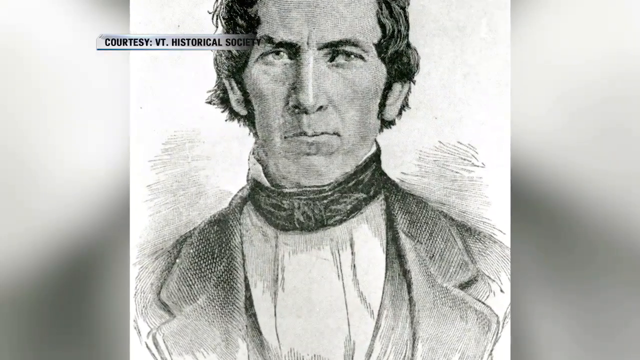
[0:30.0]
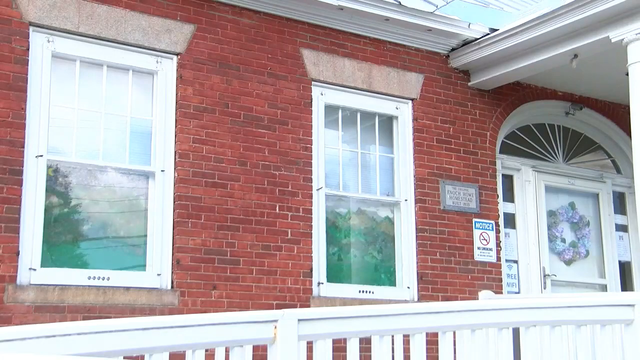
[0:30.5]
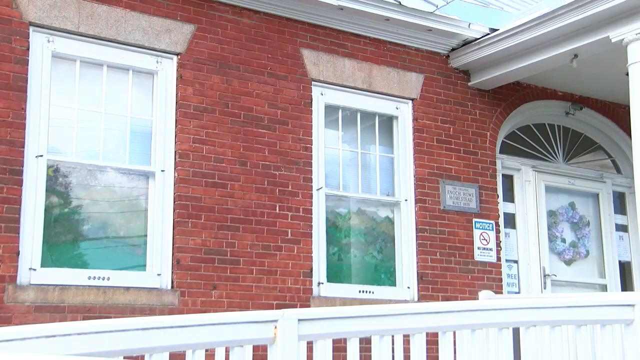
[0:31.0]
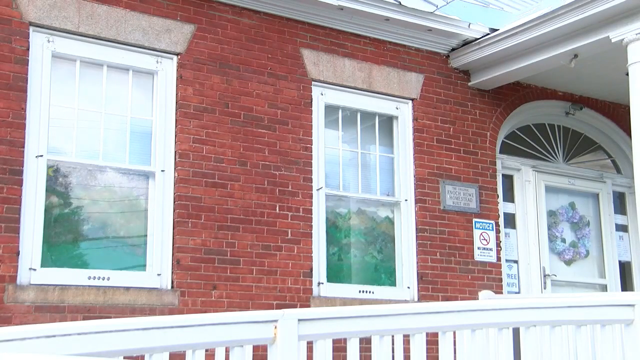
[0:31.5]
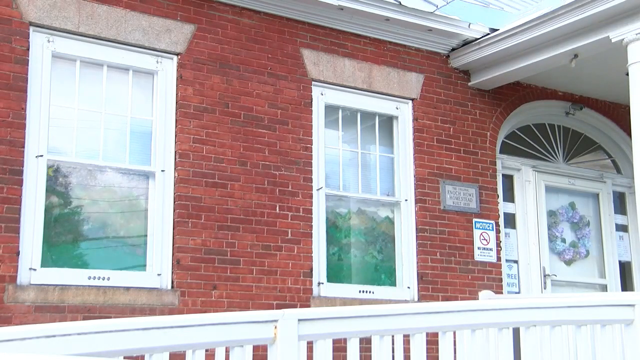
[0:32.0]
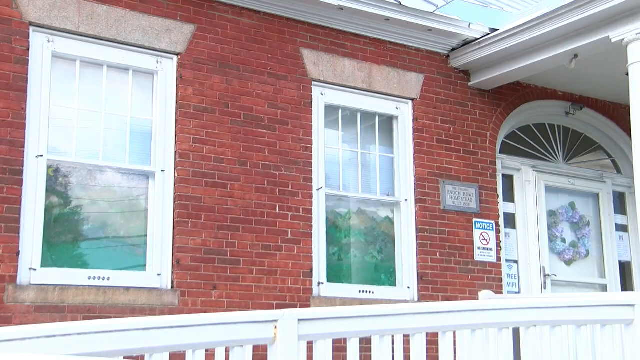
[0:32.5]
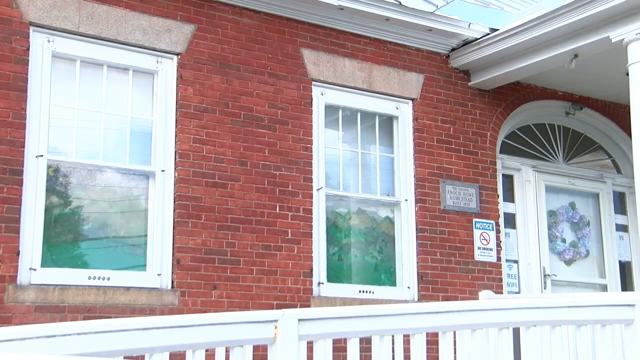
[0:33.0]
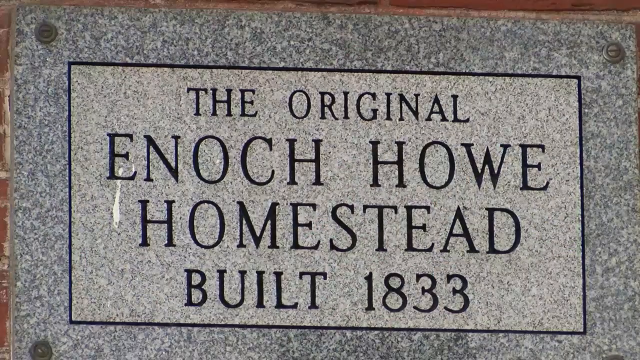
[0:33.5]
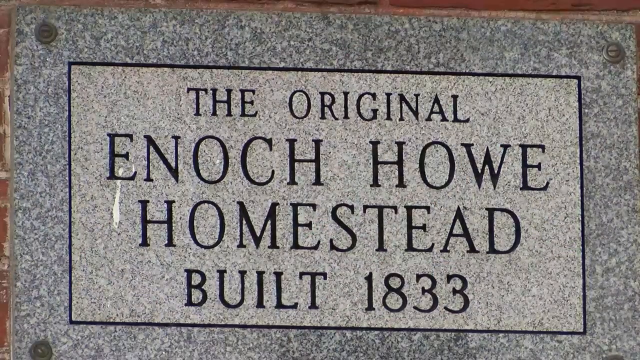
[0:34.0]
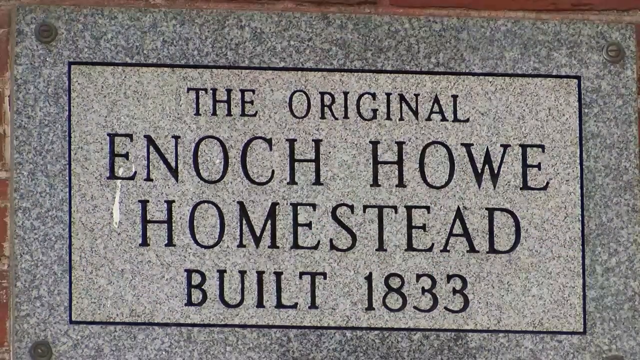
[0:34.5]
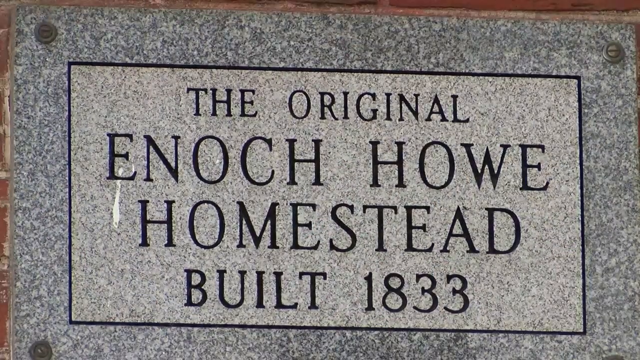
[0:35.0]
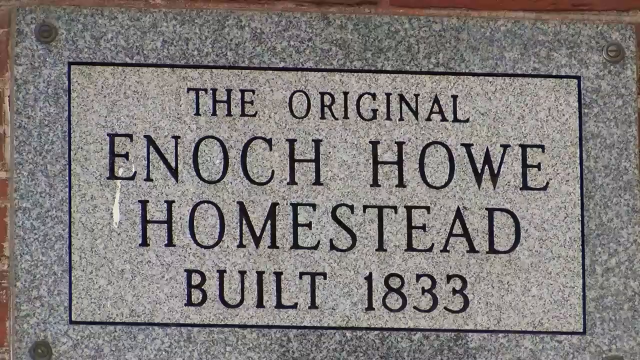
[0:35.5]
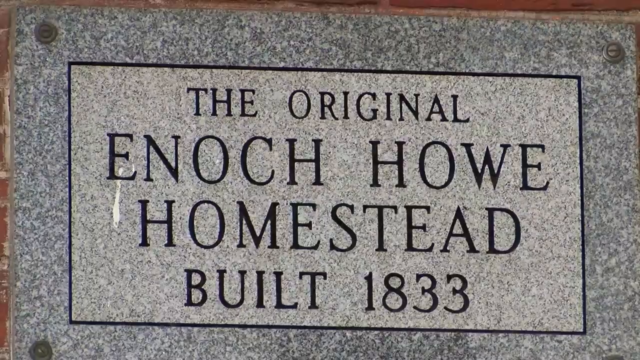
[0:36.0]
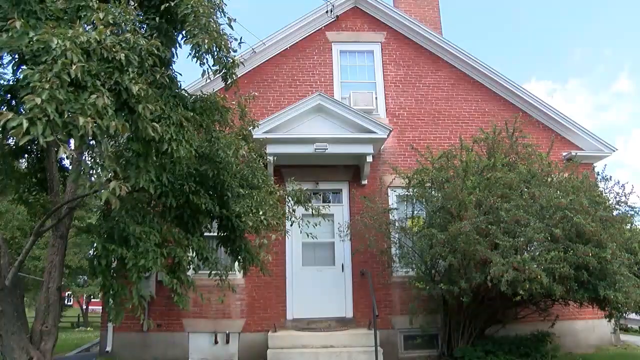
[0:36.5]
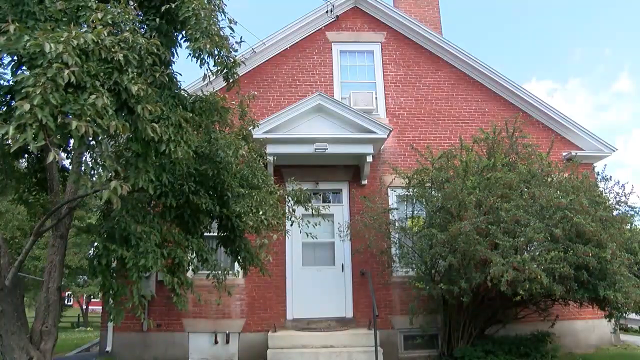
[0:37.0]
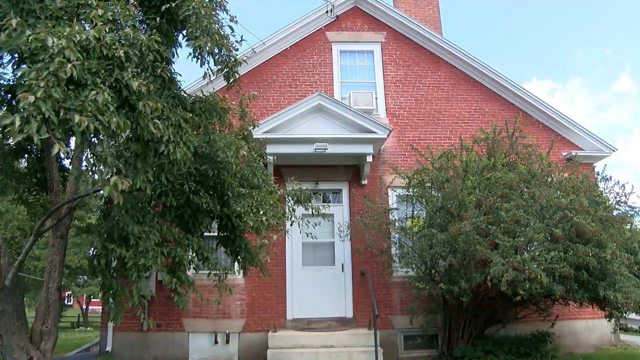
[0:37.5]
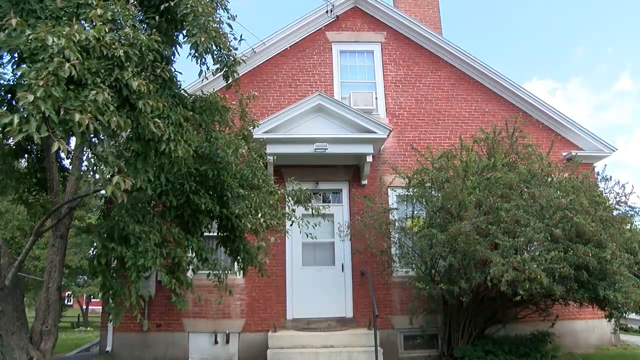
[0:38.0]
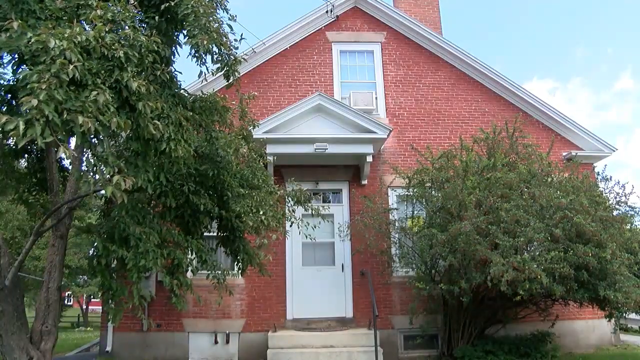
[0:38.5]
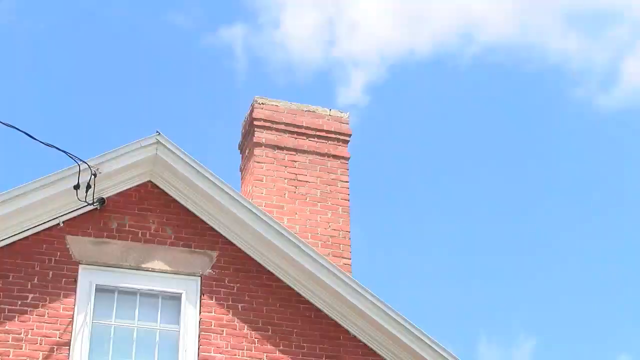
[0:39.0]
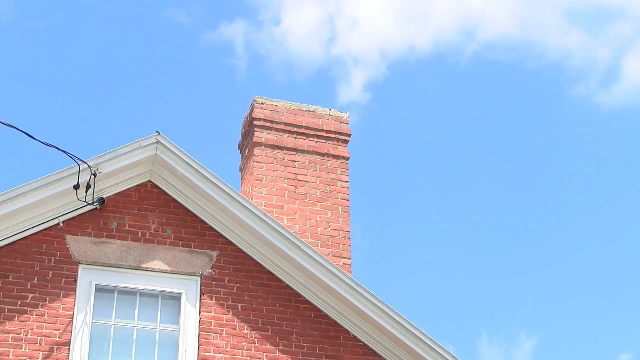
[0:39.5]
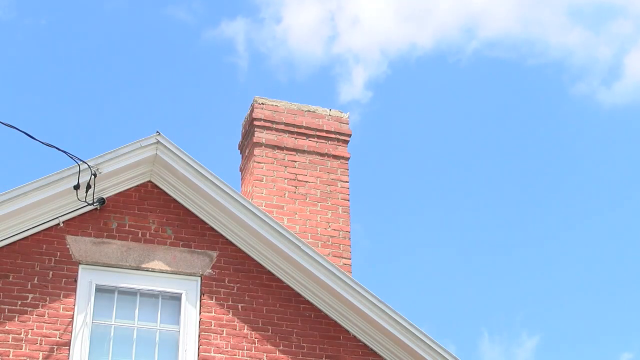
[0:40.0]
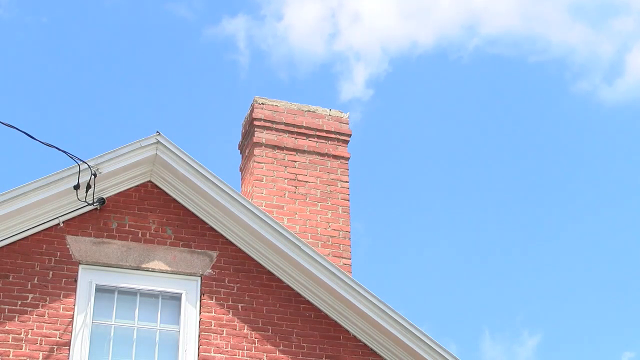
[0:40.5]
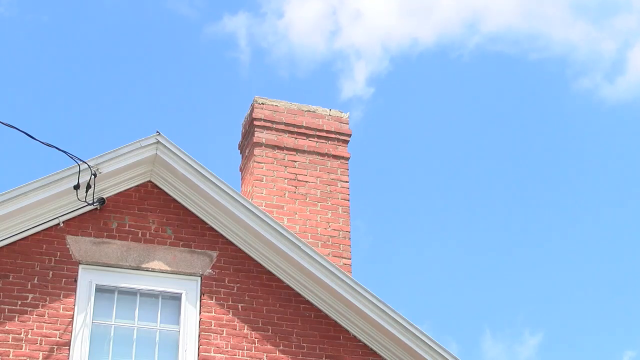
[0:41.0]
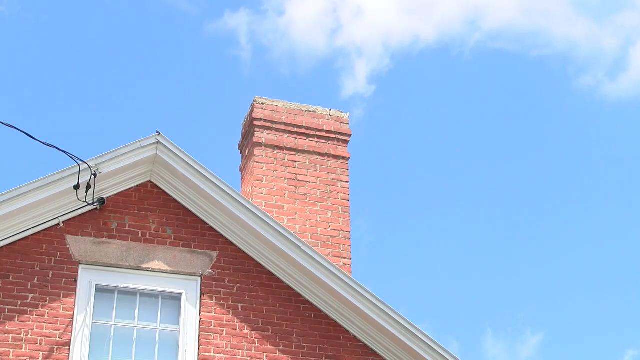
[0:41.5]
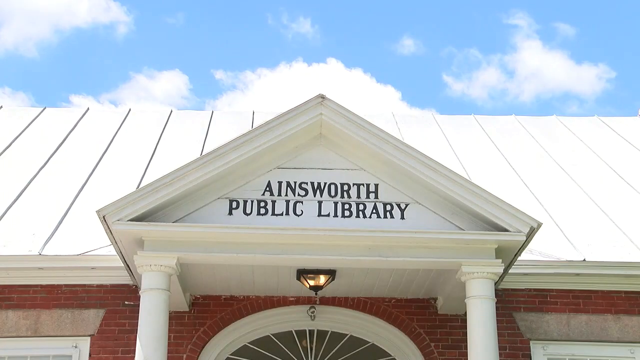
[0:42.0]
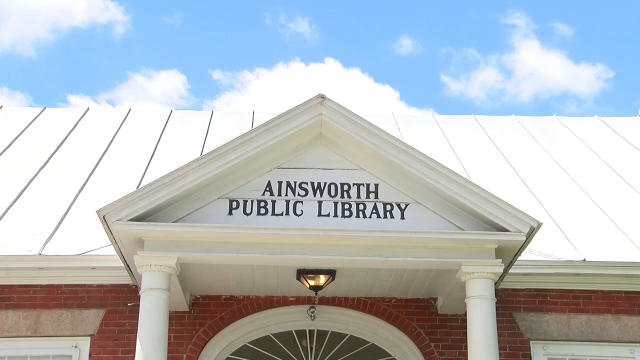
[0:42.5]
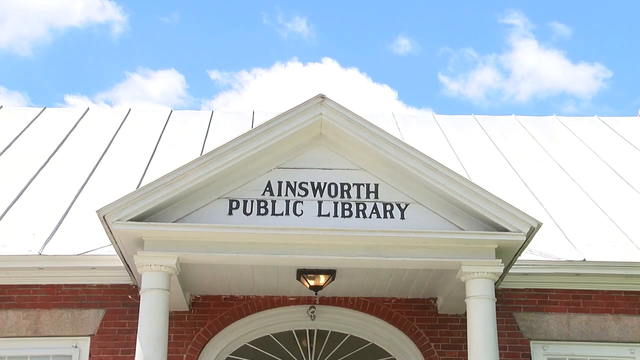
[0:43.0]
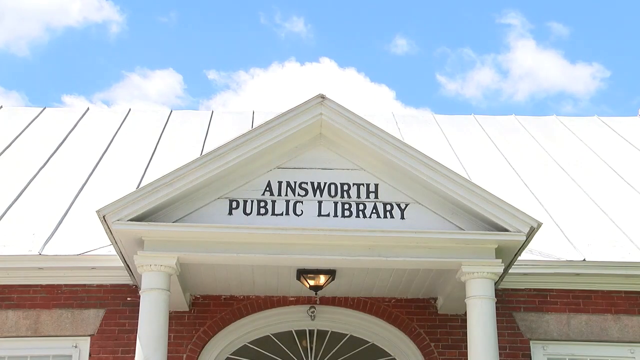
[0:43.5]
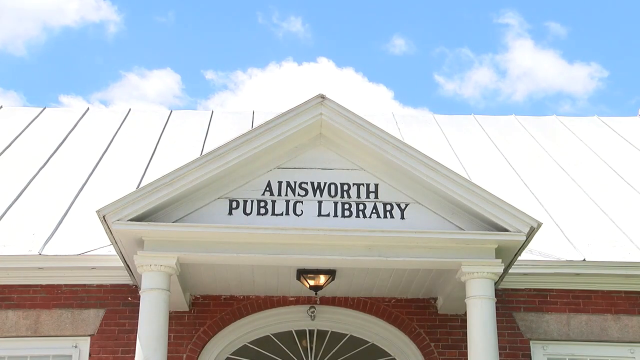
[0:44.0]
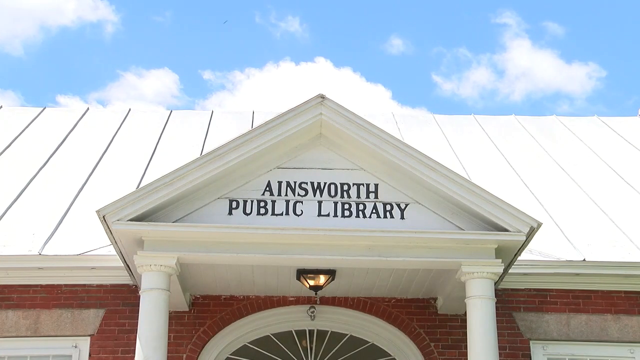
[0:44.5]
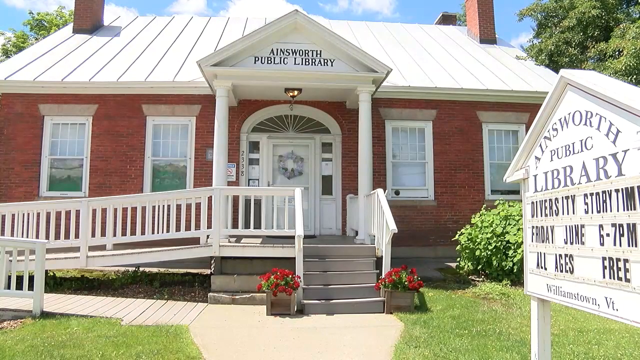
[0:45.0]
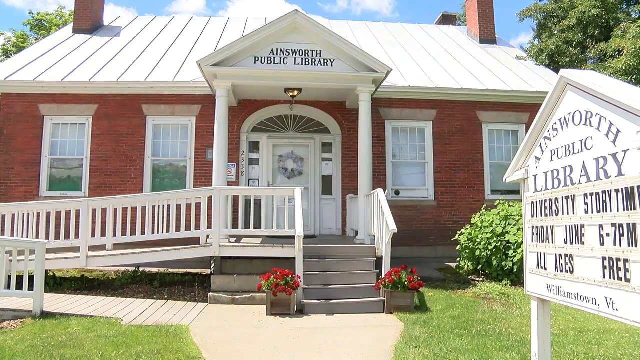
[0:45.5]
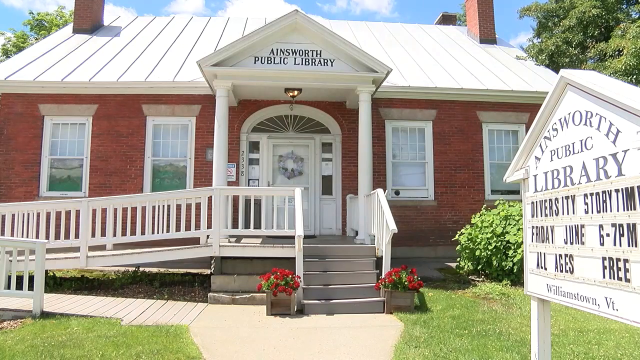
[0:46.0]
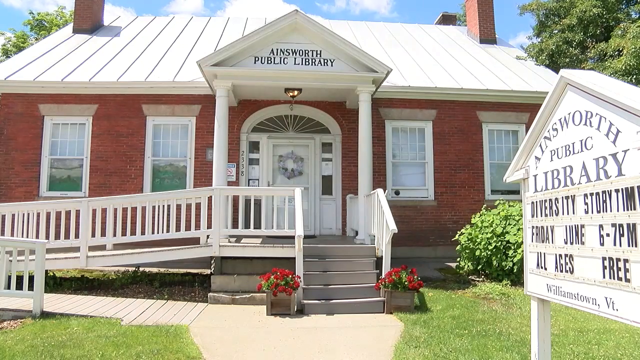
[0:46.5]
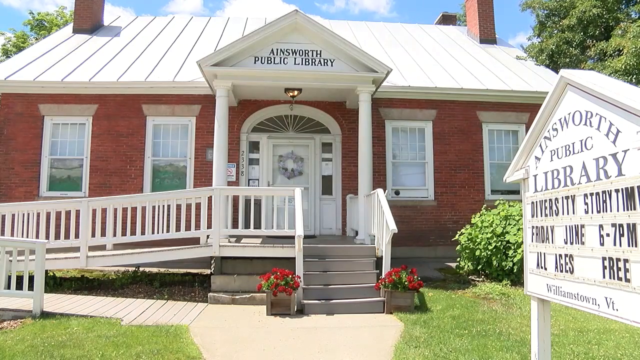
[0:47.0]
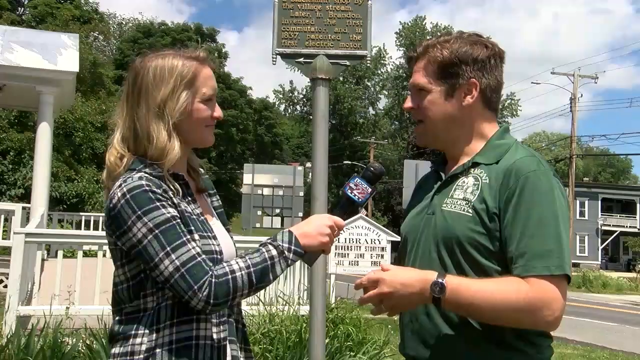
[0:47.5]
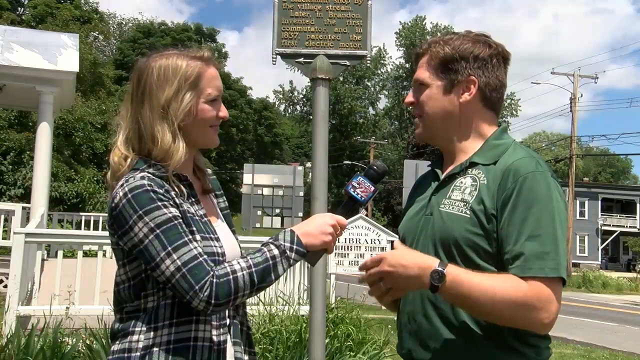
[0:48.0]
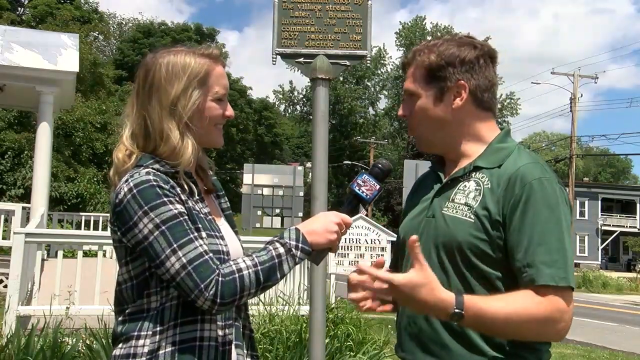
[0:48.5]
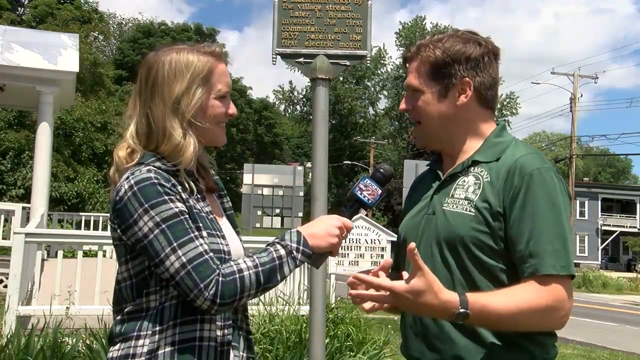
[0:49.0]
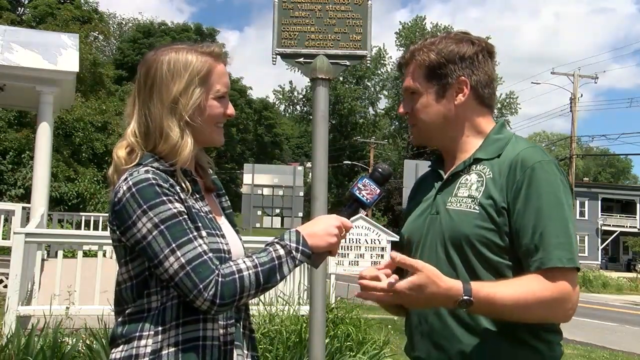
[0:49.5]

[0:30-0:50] A drawing of a man looks kind of like a portrait. The video cuts to what looks like a brick house with white trim, with two windows and a really giant entrance, and then to a plaque that reads "the original Enoch Howe Homestead, 1833". The camera pans out to a wider shot of the home, with some trees in front of it, apparently showing the back of the house, where there is a white back door and three windows. The camera zooms in on the chimney, also made of adobe-colored bricks, and then zooms in on the roof of a building with a sign that reads "Ainsworth Public Library".